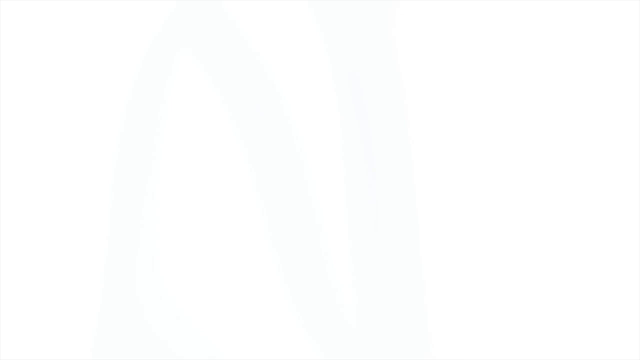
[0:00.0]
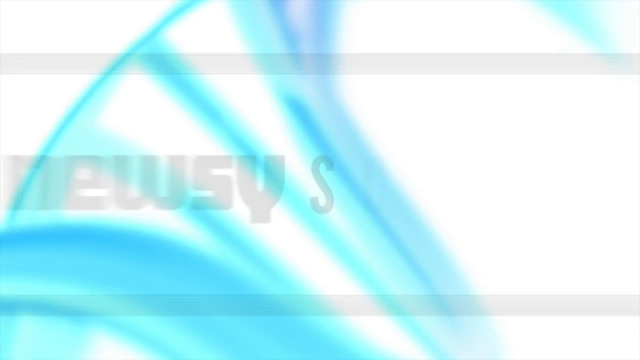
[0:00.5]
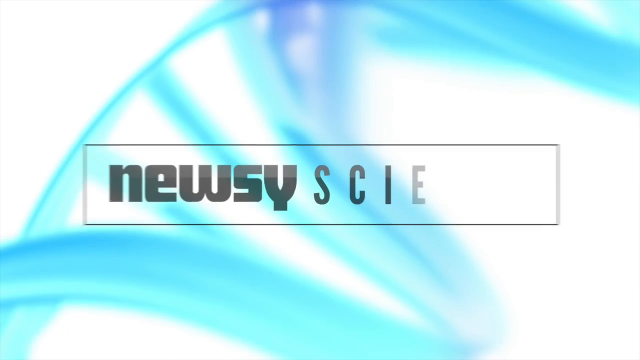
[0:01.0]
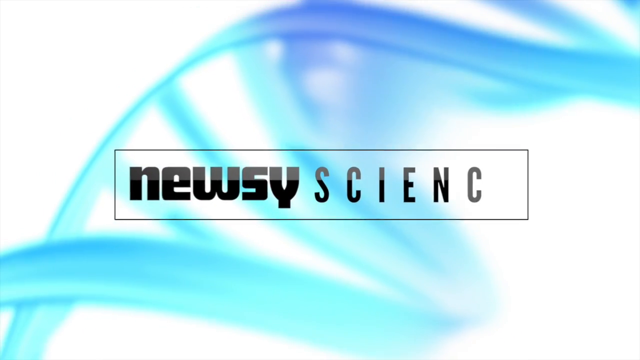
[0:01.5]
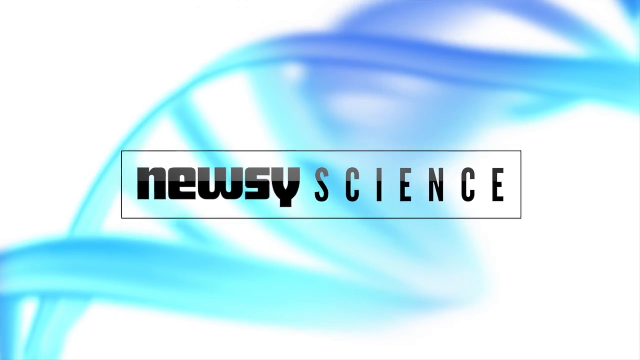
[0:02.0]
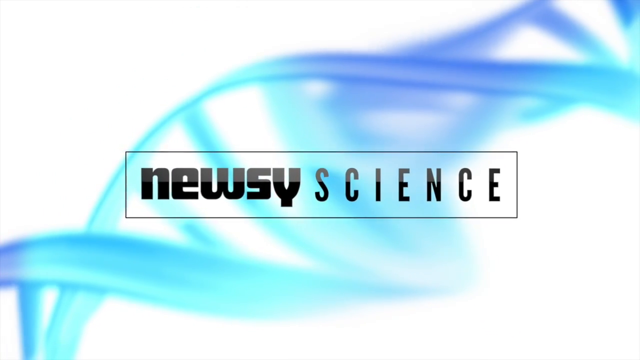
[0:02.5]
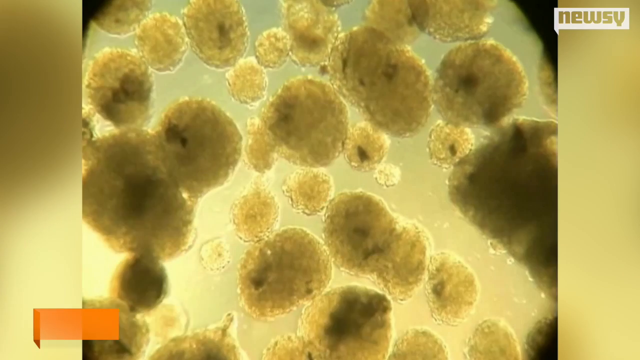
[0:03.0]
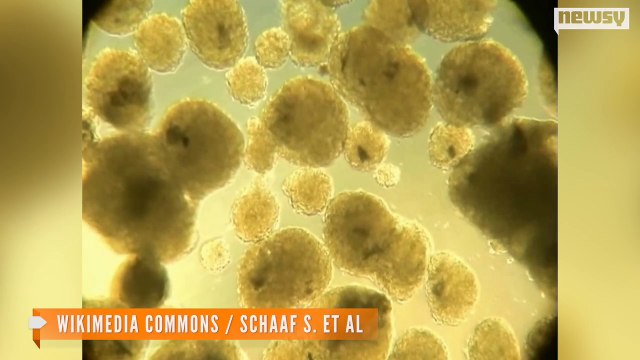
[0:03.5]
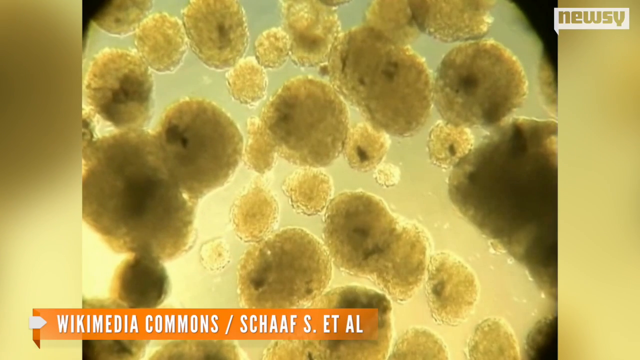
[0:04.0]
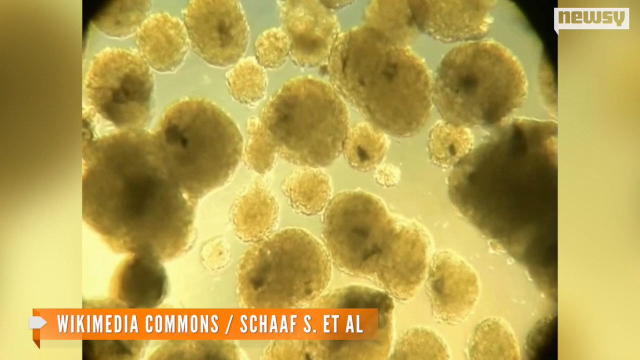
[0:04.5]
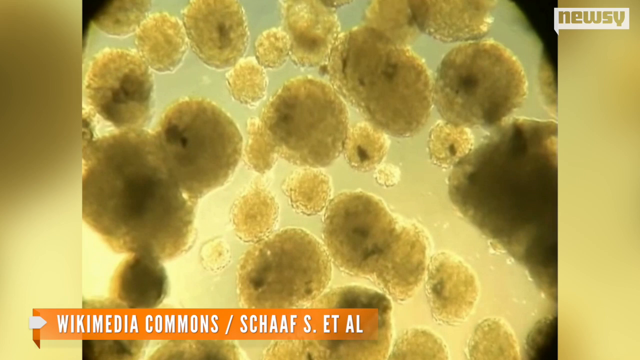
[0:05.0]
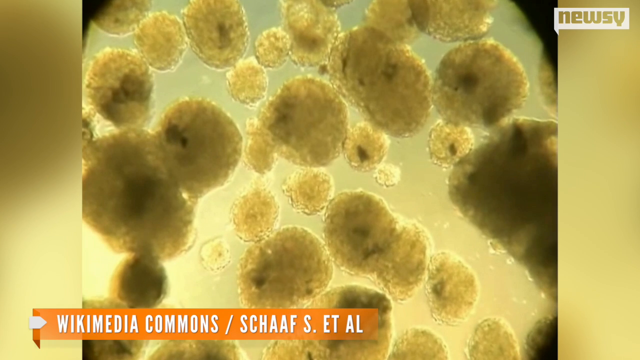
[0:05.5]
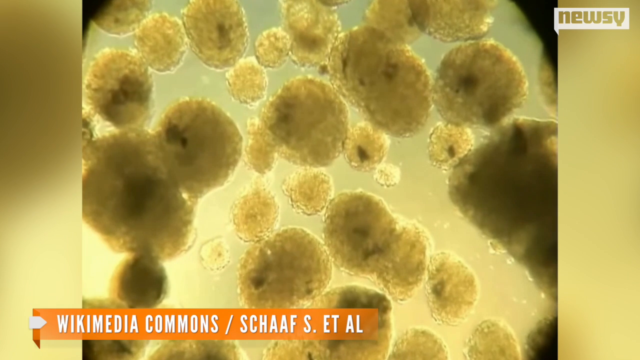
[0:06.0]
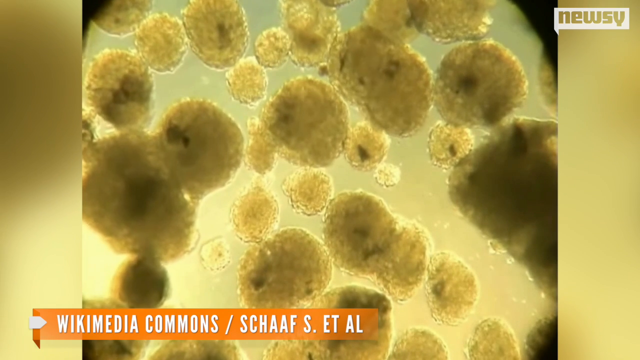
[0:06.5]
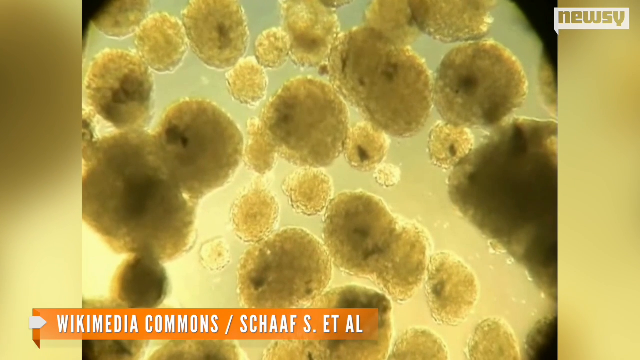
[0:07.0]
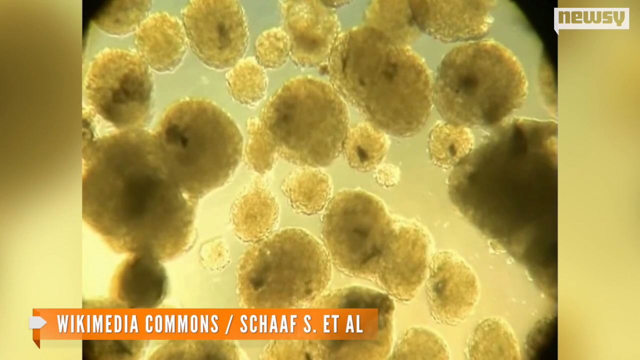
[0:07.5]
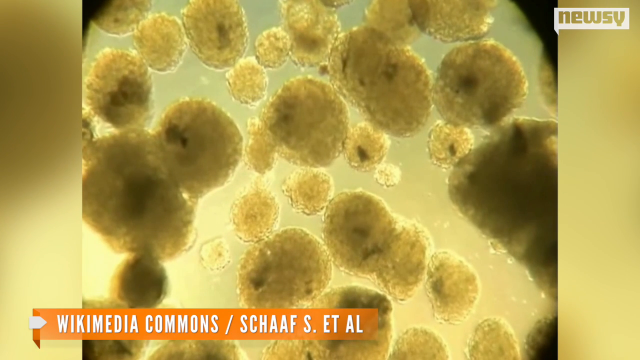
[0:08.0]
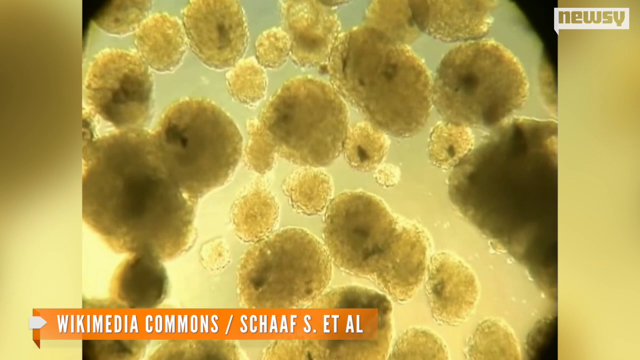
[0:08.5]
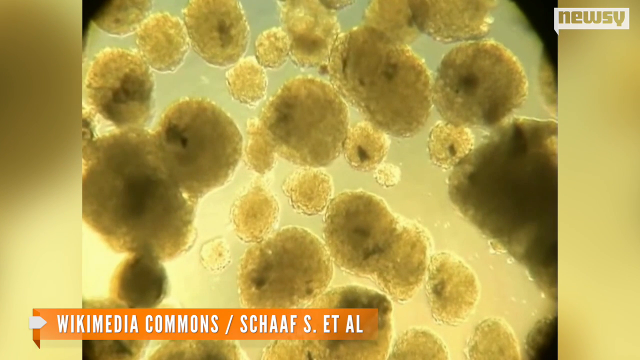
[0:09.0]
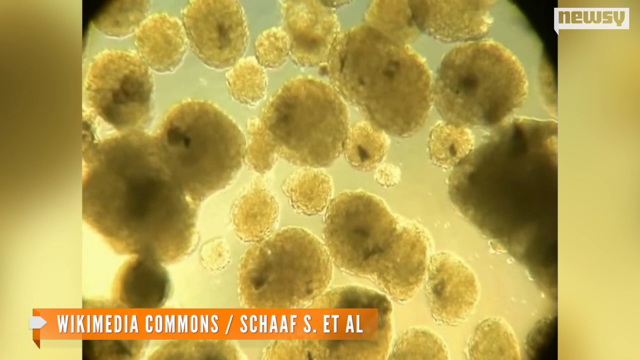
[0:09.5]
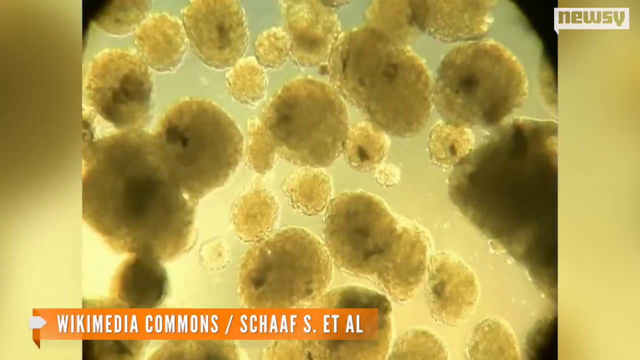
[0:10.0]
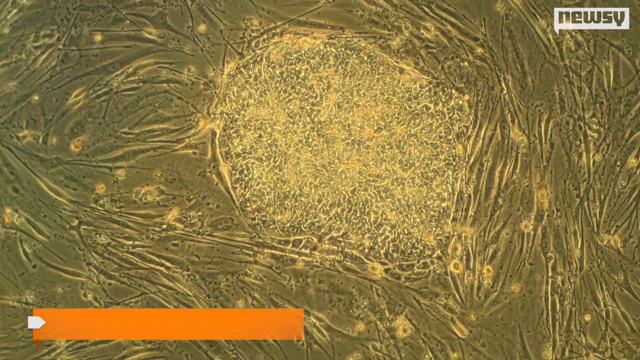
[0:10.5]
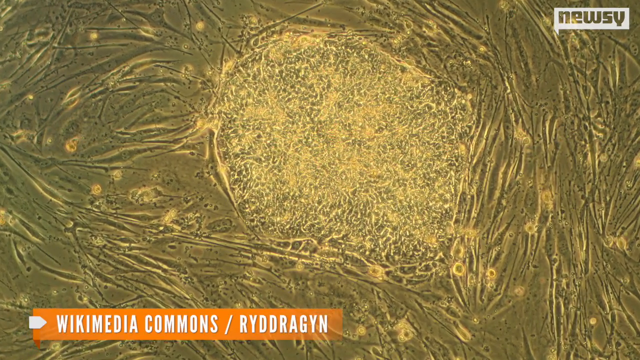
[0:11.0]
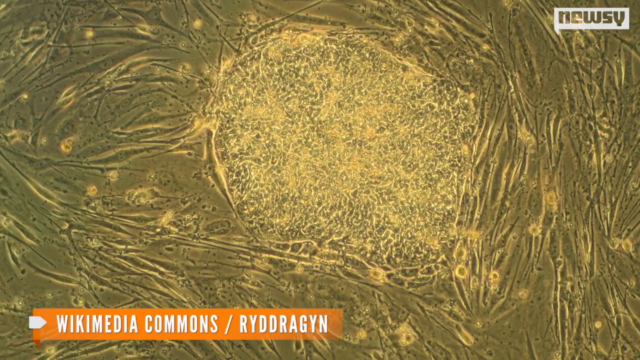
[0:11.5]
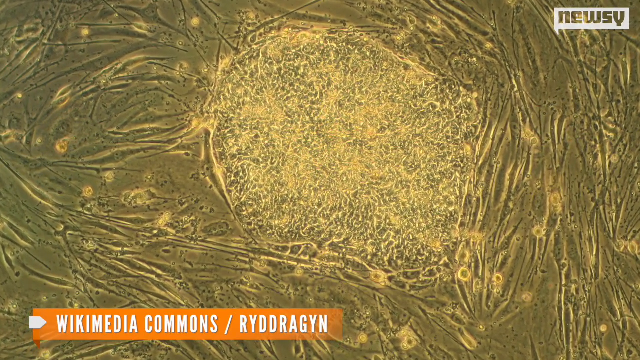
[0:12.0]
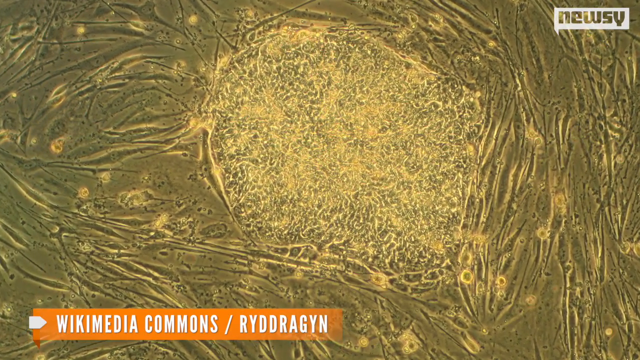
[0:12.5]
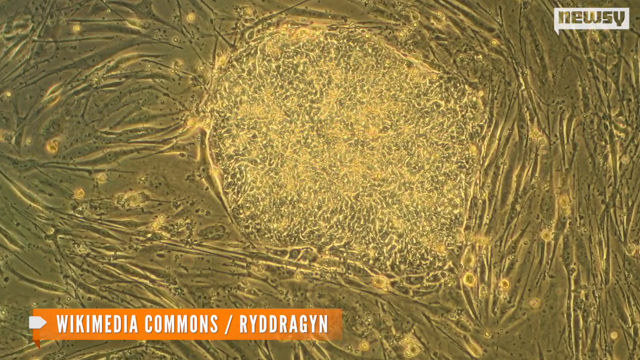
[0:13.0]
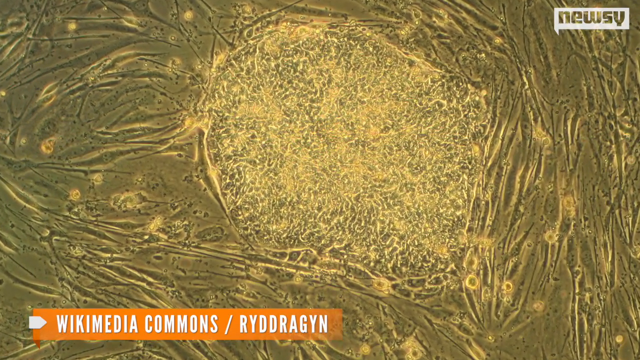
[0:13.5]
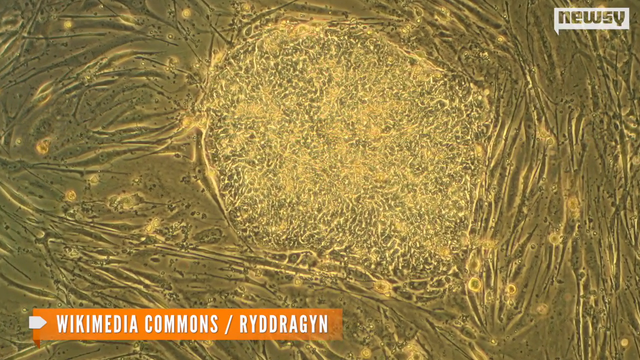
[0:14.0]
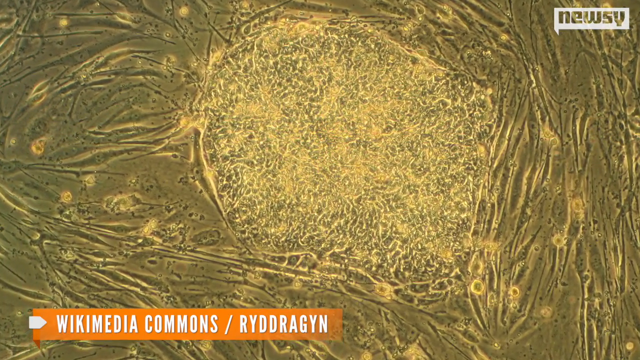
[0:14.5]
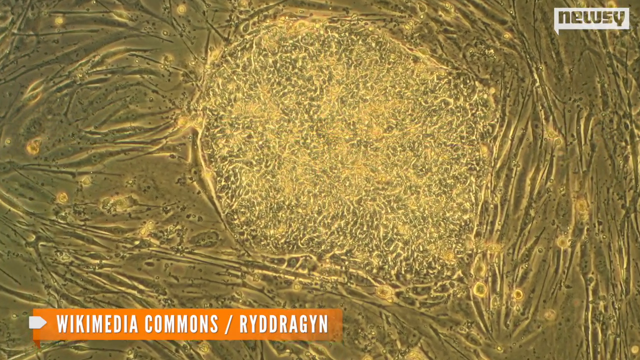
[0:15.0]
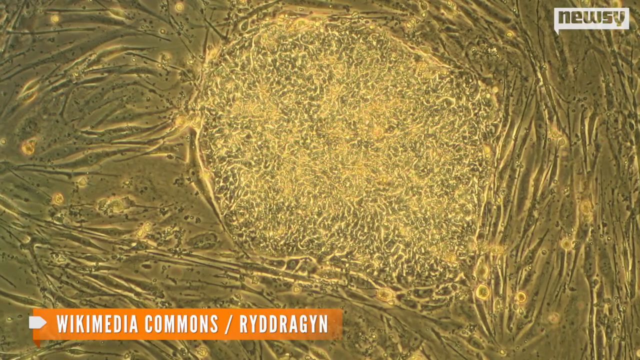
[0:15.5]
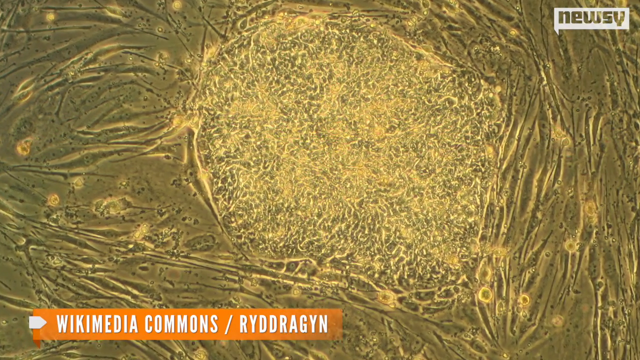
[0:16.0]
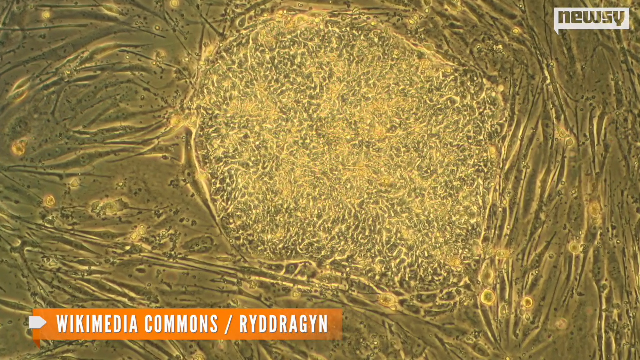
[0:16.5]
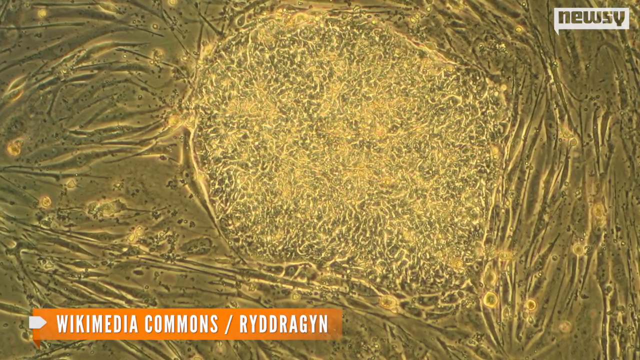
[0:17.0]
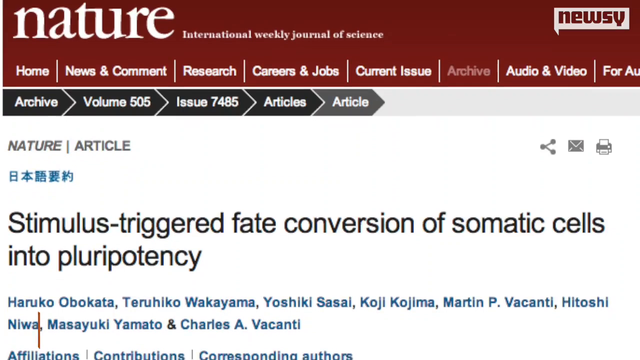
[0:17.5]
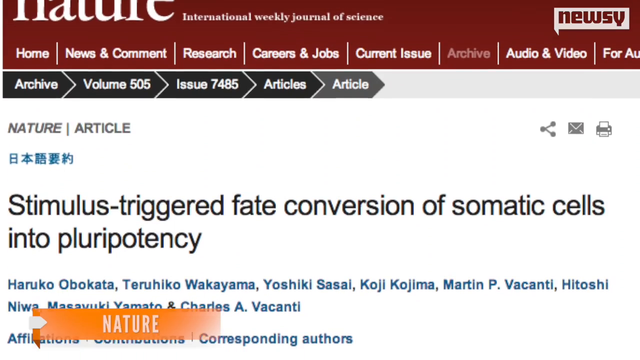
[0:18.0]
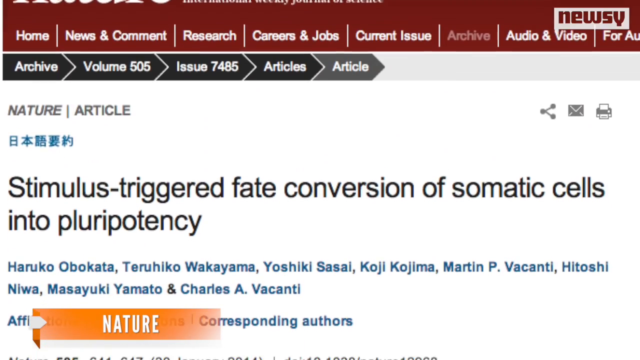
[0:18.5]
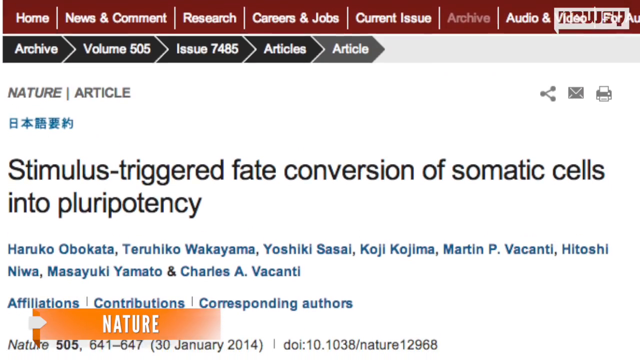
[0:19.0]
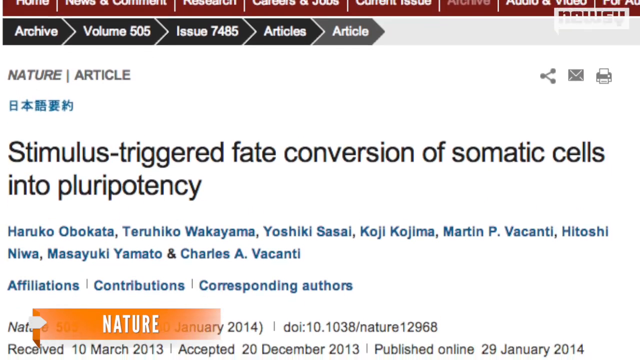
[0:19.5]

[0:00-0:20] The video opens with "Newsy Science" (Newsy spelled N-E-W-S-Y), and text reads "Wicca Media Commons." What look like bacteria or cells move under a microscope; their location is unclear. A different view of one of them follows, showing what looks like some type of cell or atom. Before the shot ends, an article appears whose title includes "triggered fate conversion of somatic cells."